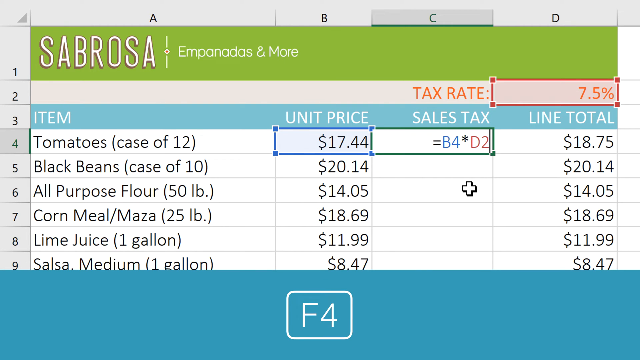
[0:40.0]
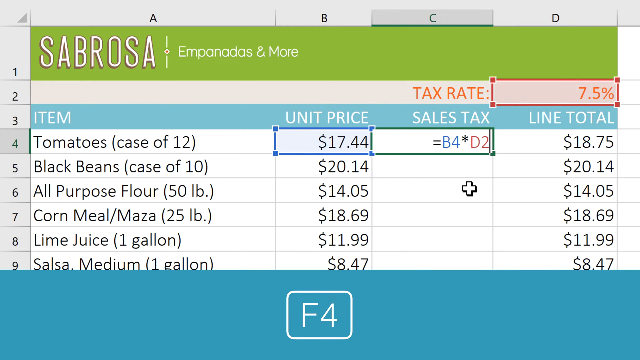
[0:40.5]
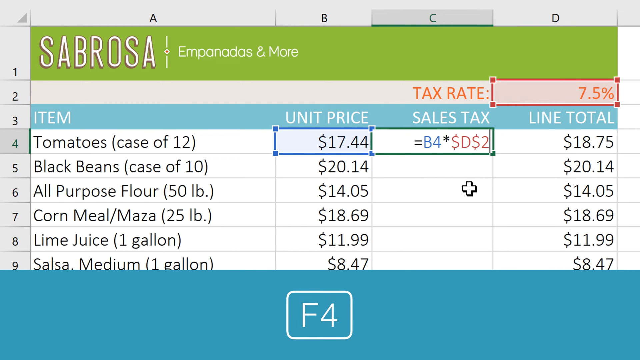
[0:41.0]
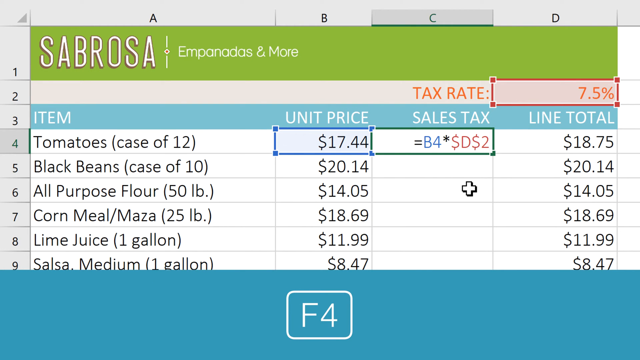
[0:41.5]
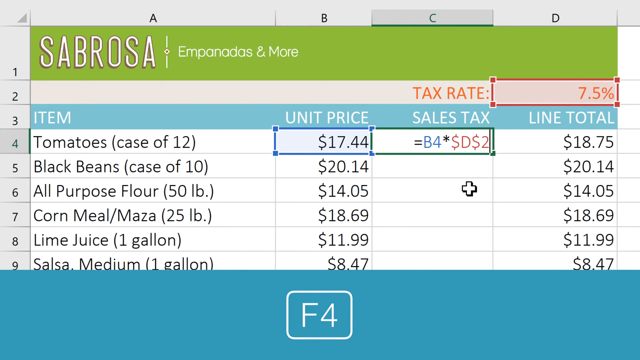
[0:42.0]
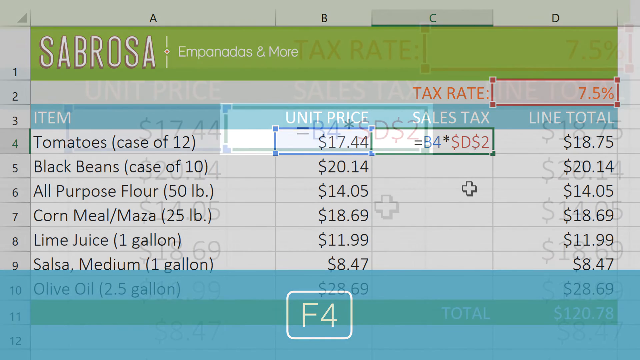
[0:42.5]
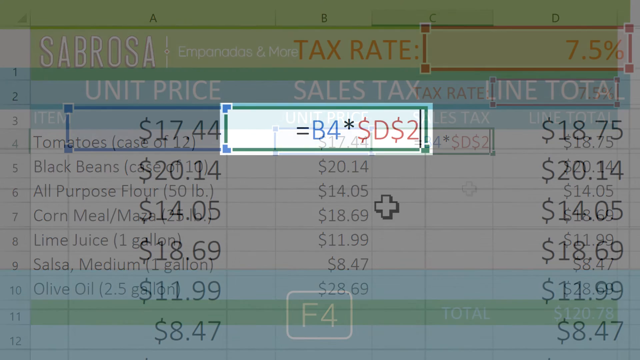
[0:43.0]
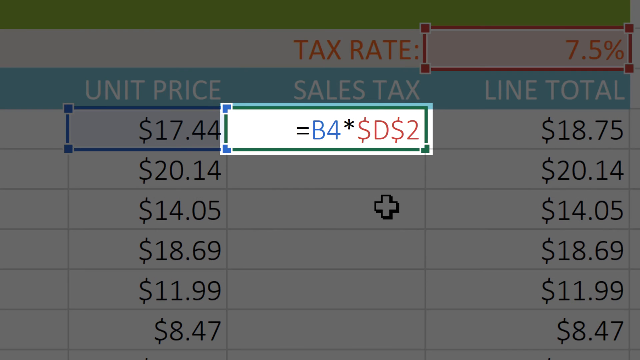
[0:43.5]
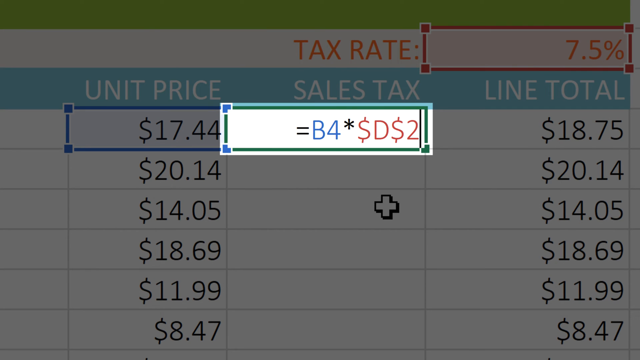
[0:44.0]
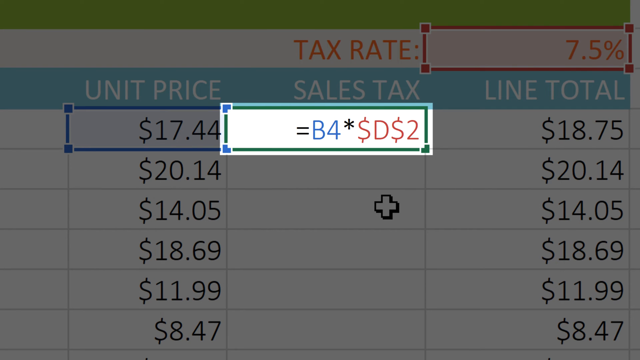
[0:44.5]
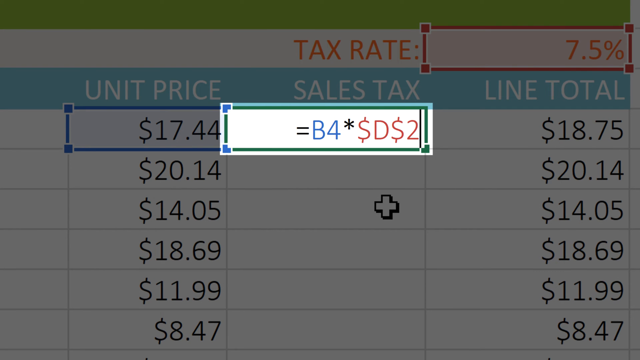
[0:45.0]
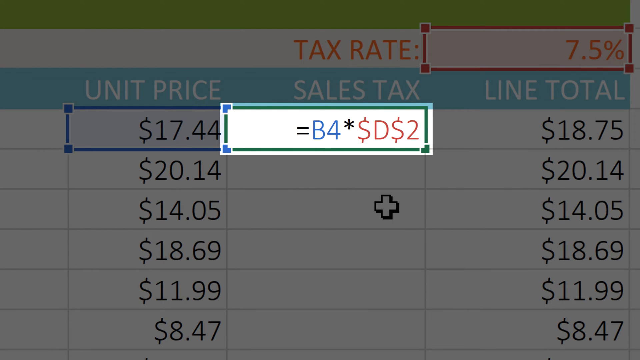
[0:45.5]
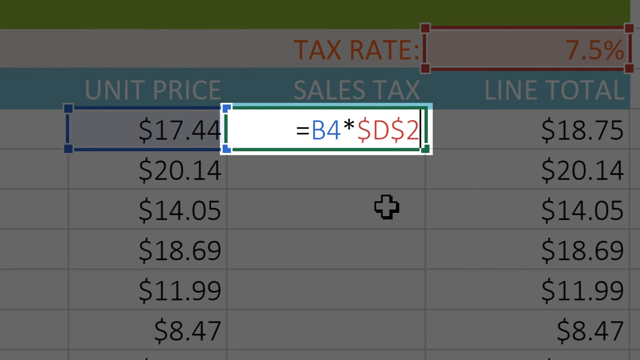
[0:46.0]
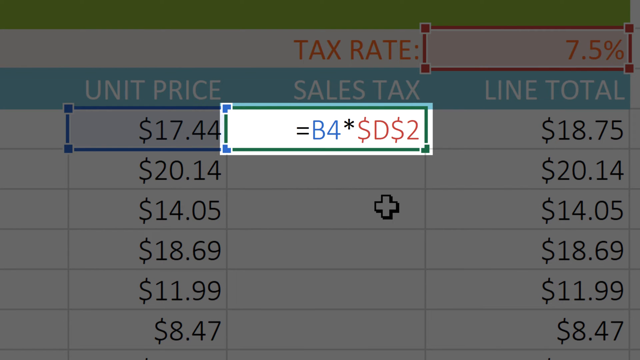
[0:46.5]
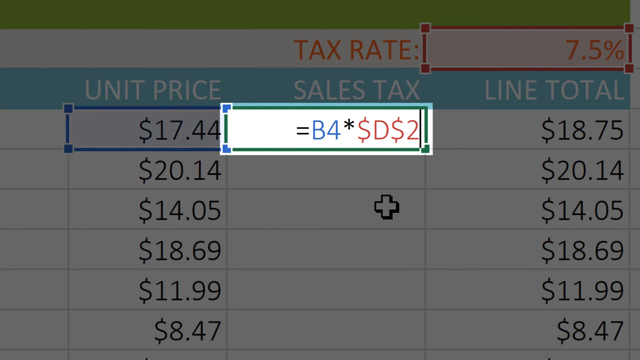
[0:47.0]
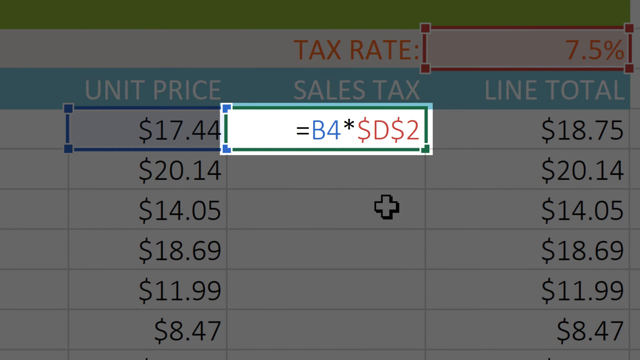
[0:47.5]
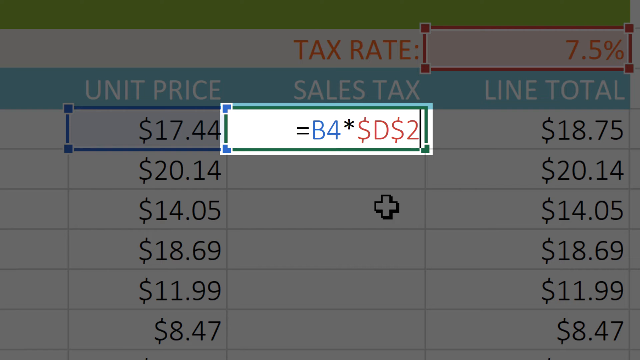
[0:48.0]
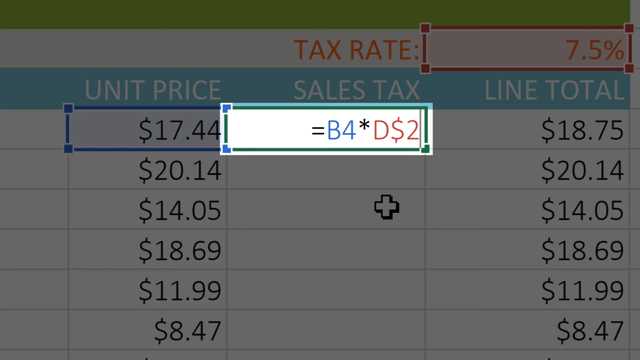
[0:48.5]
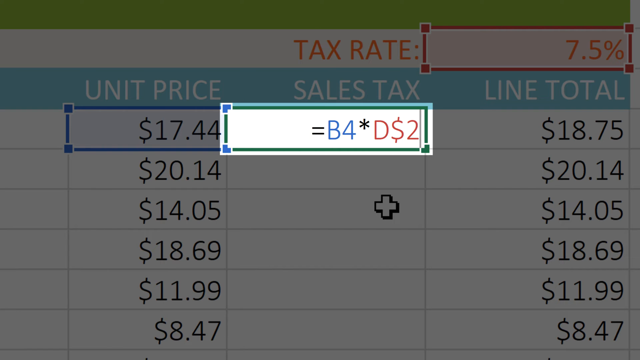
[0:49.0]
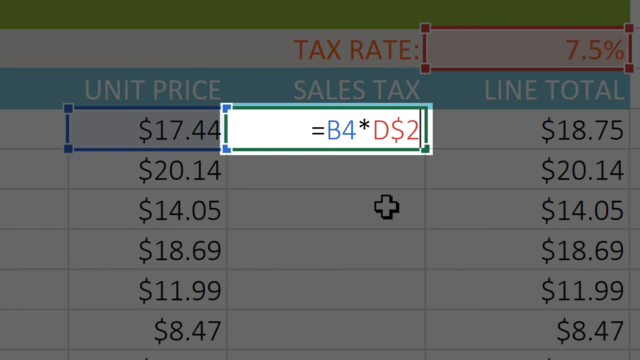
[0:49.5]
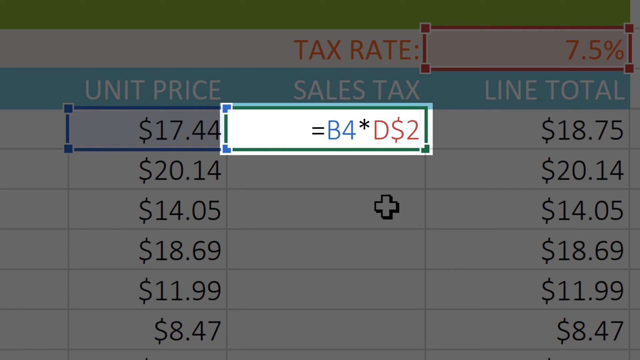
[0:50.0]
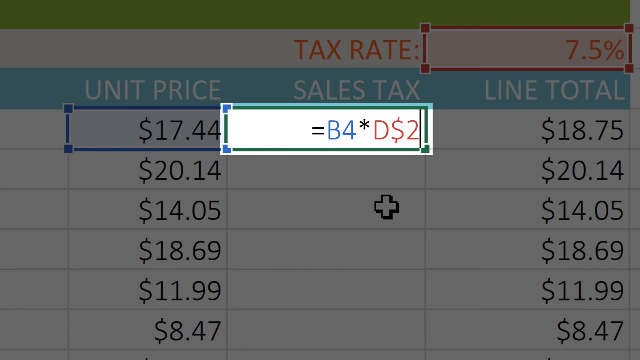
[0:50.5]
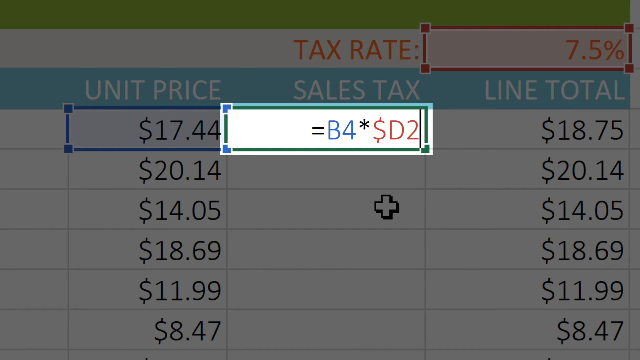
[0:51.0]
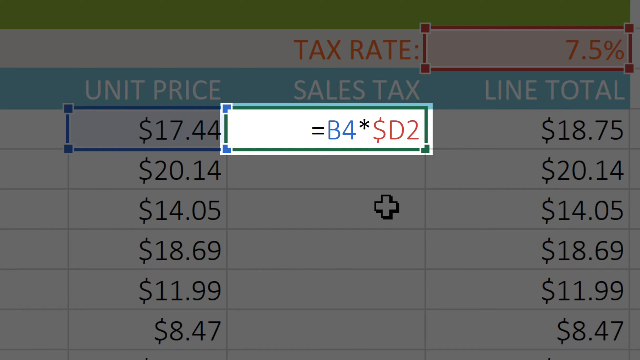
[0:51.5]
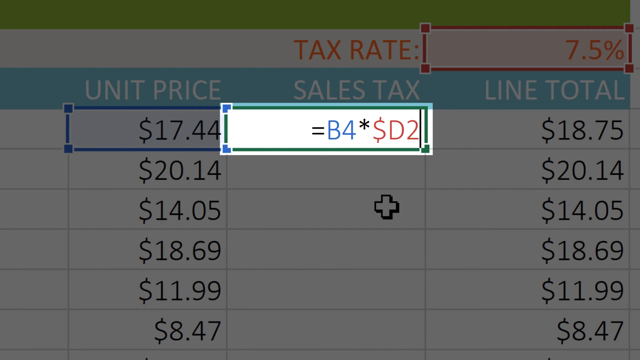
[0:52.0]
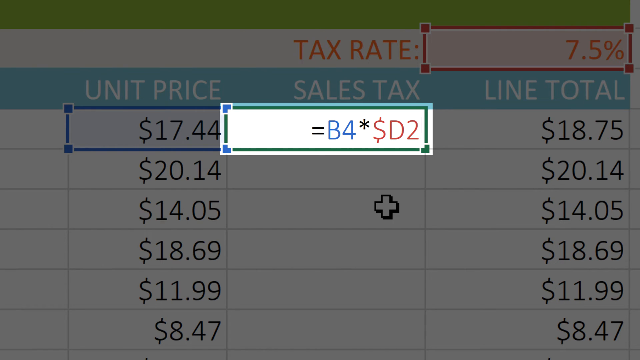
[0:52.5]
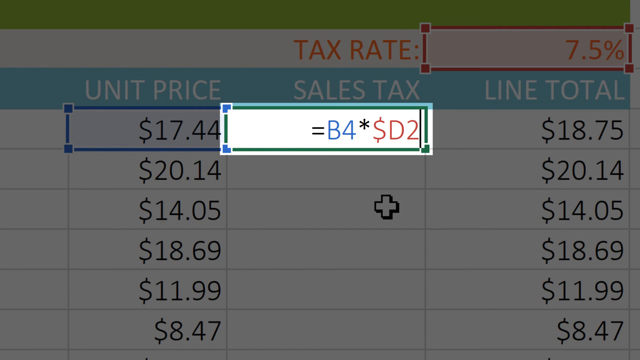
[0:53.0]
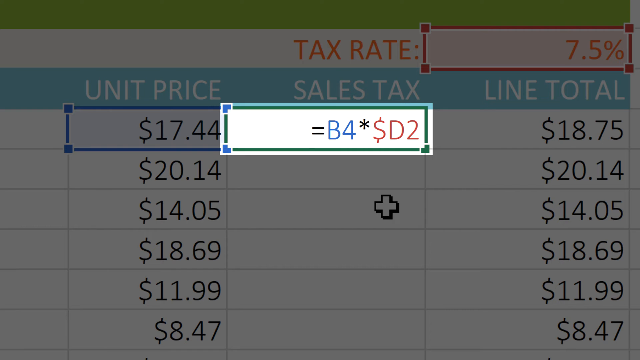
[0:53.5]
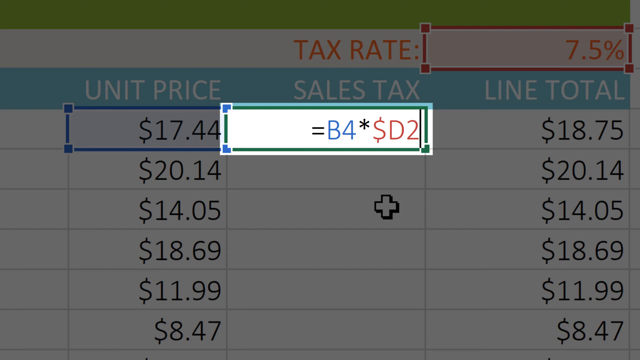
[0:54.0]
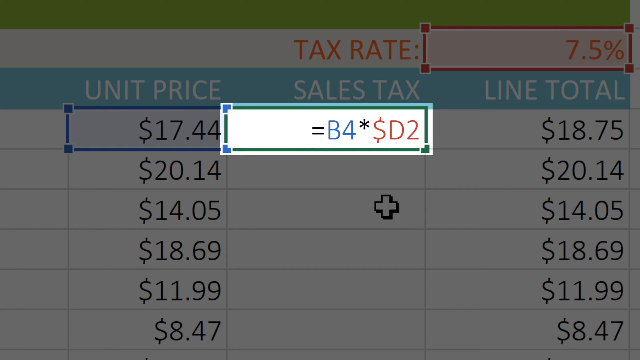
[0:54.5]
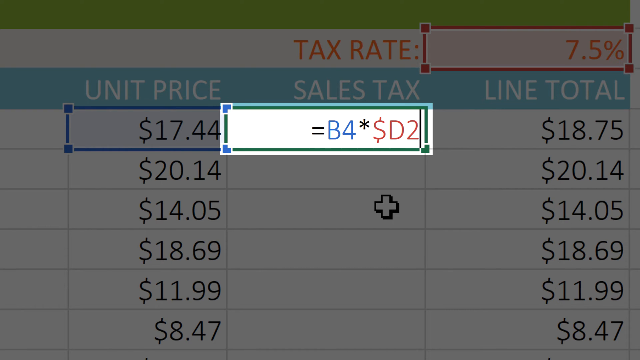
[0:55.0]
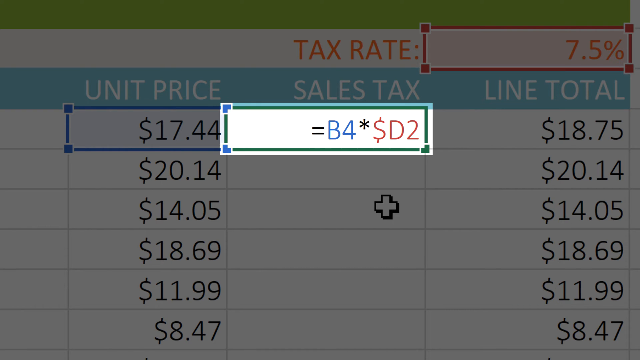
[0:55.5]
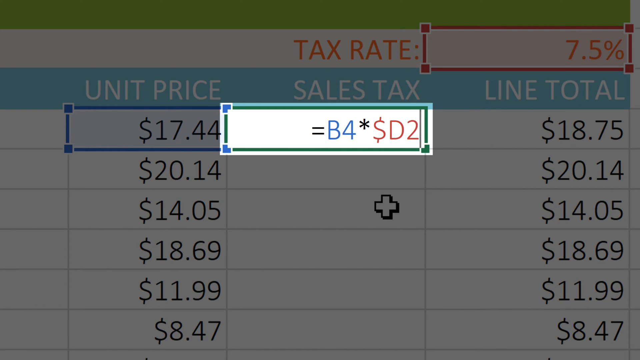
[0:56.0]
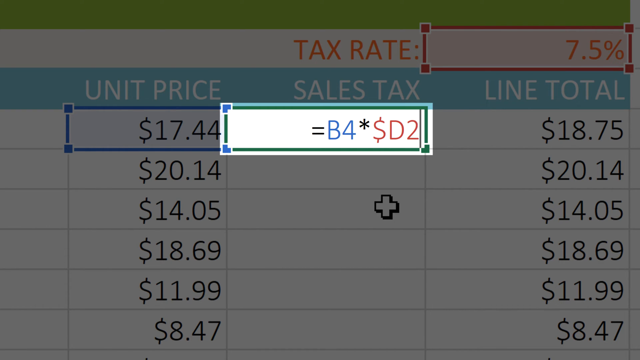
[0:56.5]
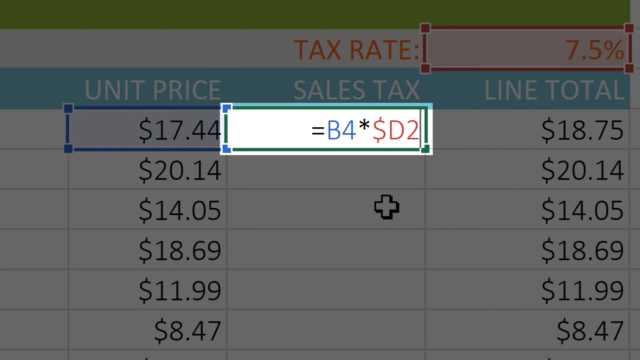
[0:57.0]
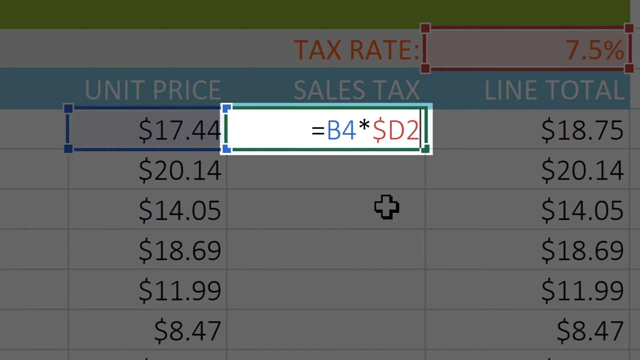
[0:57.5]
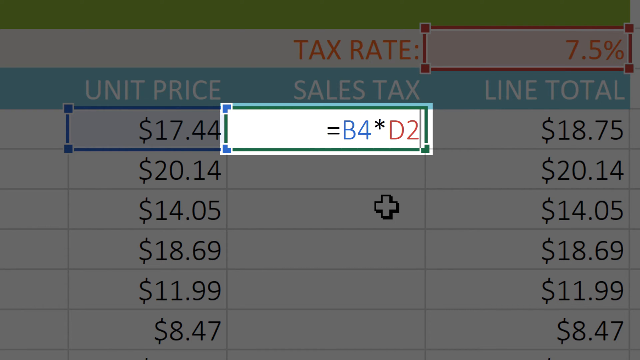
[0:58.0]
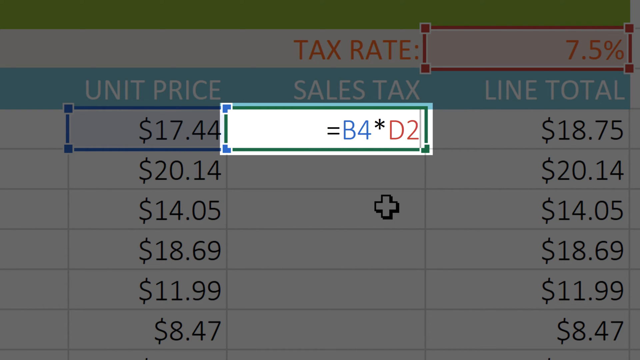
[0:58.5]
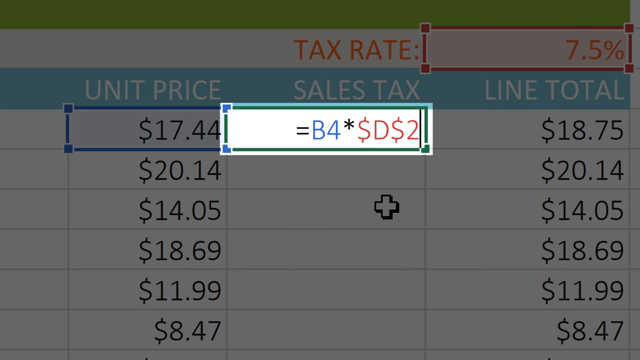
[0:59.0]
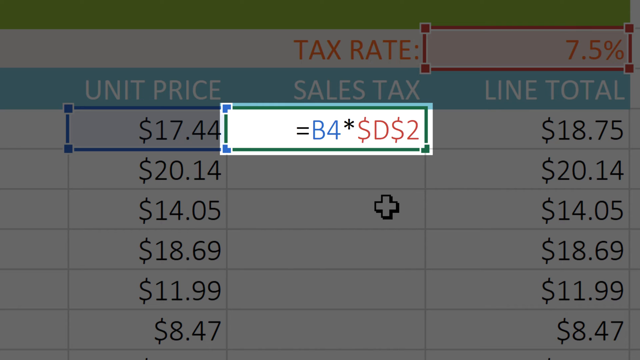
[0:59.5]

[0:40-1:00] The same Sabrosa Empanadas and more page is shown with listed items. Tomatoes, case of 12, have a unit price of 17.44, a sales tax of B4D2 and a line total of 18.75, with a tax rate of 7.5%. Black beans, case of 10, are $20.14 with a line total of $20.14. All-purpose flour, 50 LB, has a unit price and line total of $14.05. Cornmeal or maza, 25 LB, has a unit price and line total of $18.69. Lime juice, one gallon, has a unit price and line total of $11.99. Salsa medium, one gallon, is listed at $18.47 with a line total of $8.47. Below that, F4 appears inside a square box. The cursor focuses on B4 of the sales tax and moves from D to D2, as if editing is going on.